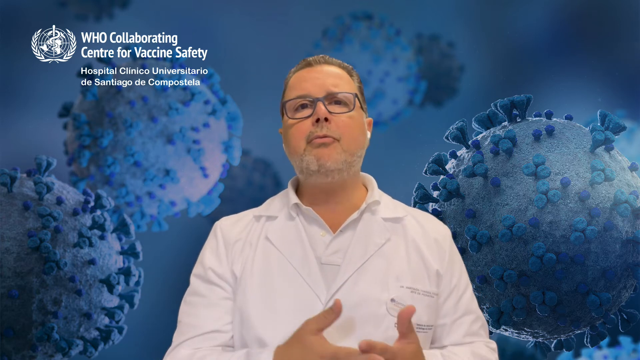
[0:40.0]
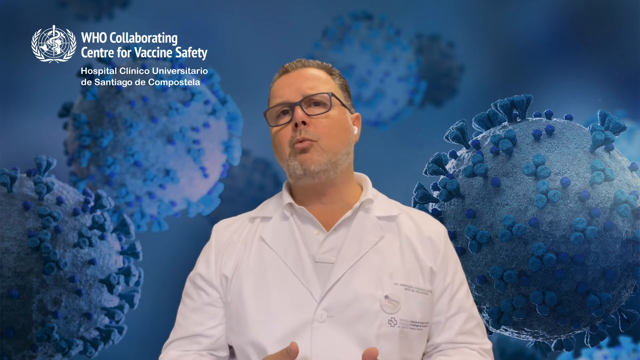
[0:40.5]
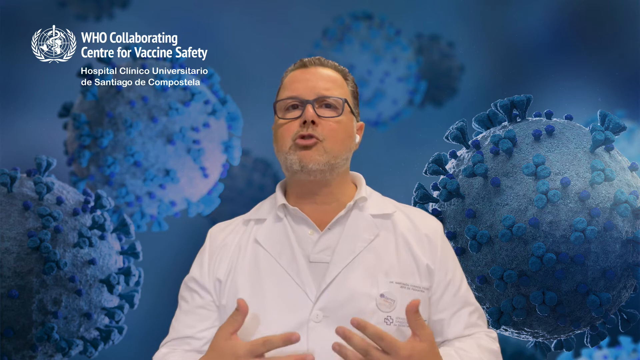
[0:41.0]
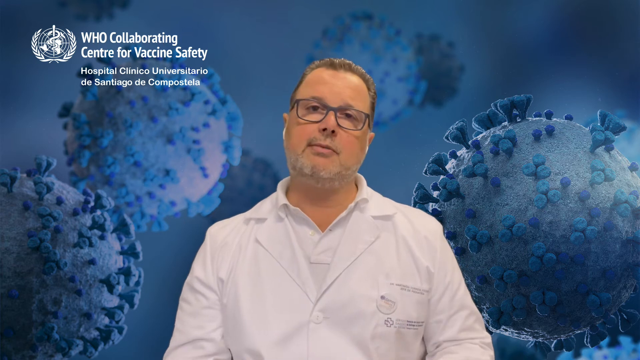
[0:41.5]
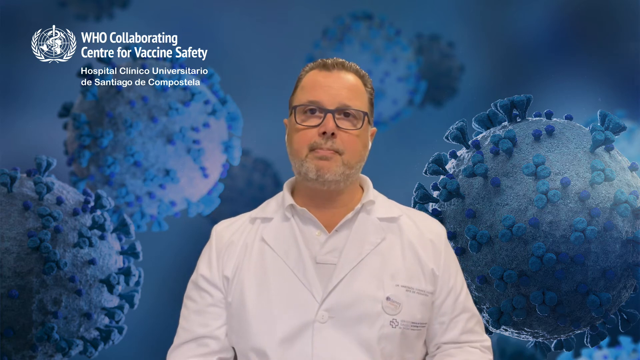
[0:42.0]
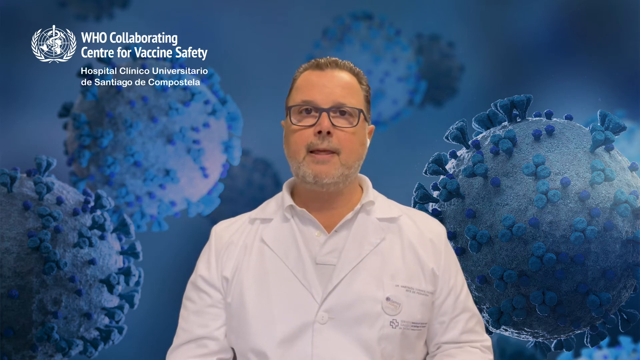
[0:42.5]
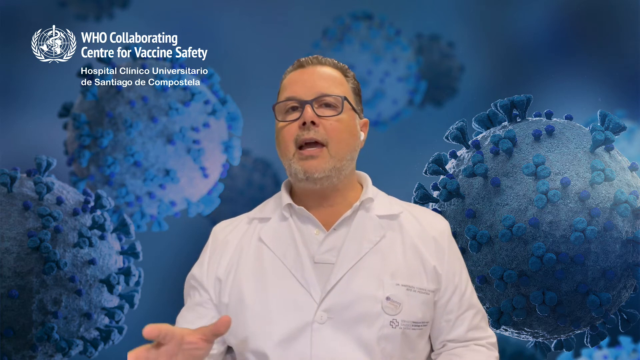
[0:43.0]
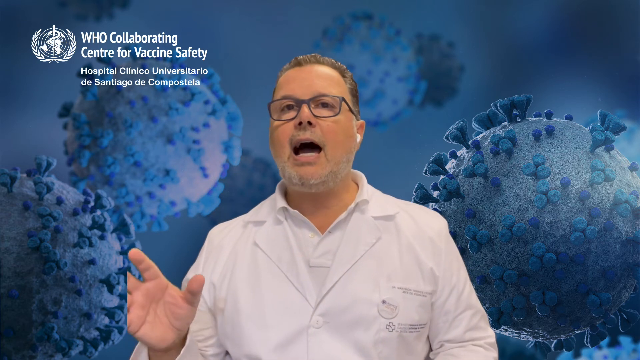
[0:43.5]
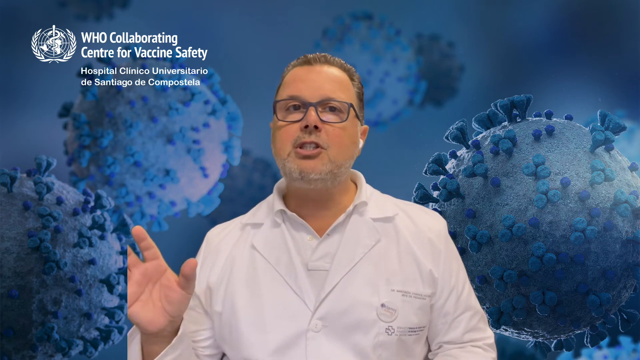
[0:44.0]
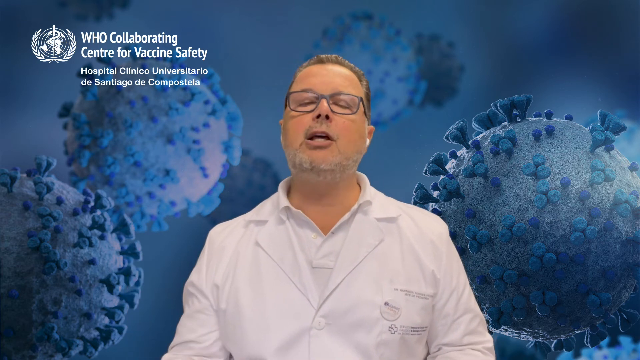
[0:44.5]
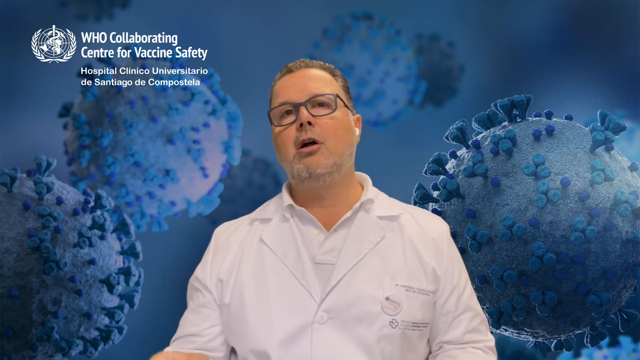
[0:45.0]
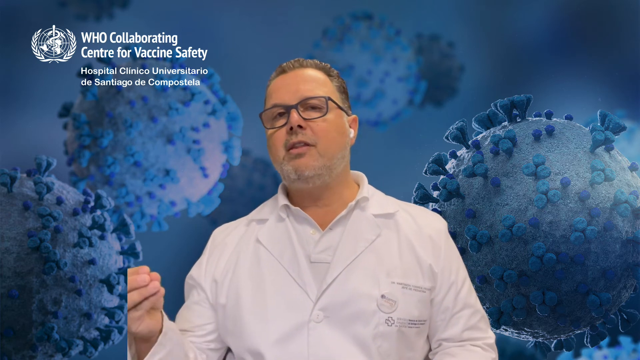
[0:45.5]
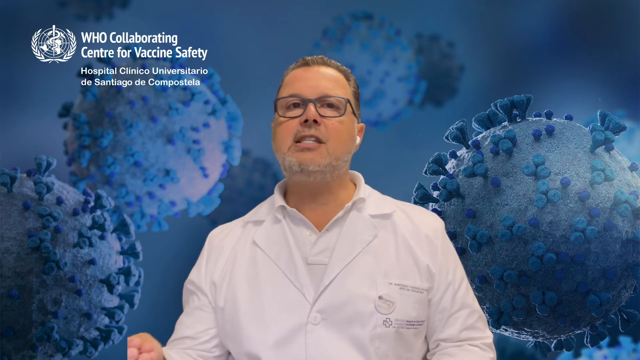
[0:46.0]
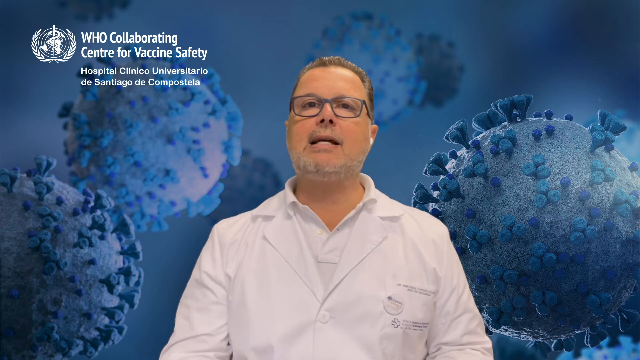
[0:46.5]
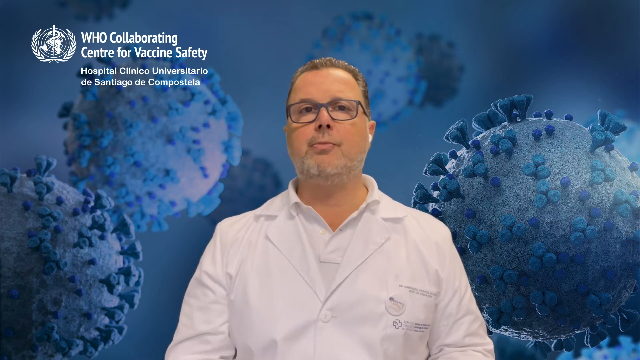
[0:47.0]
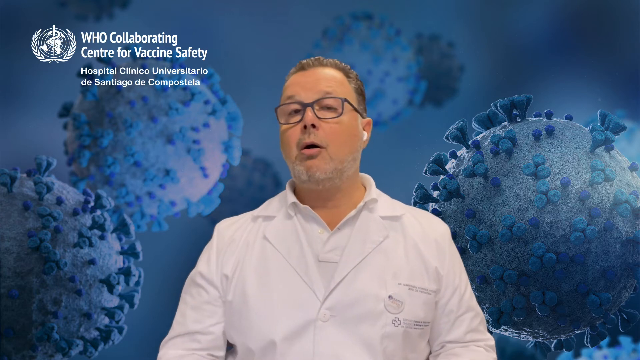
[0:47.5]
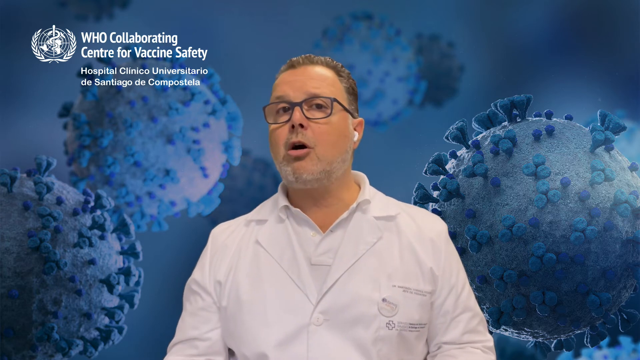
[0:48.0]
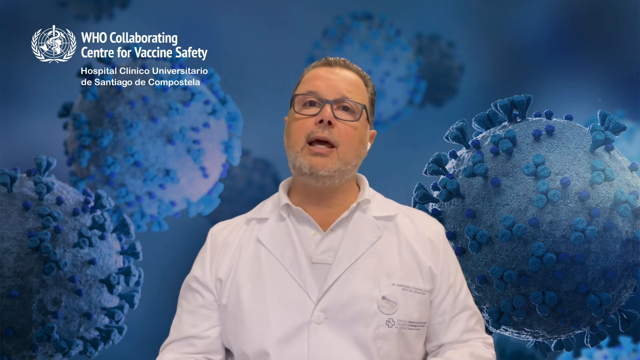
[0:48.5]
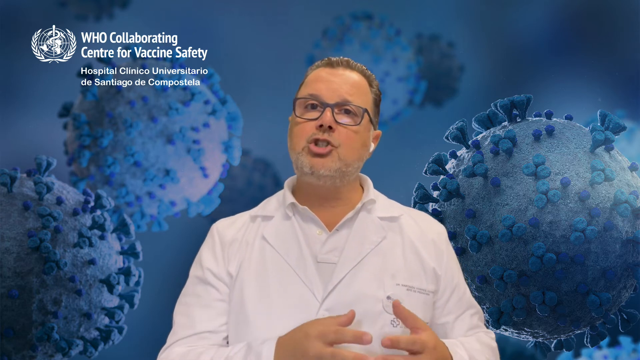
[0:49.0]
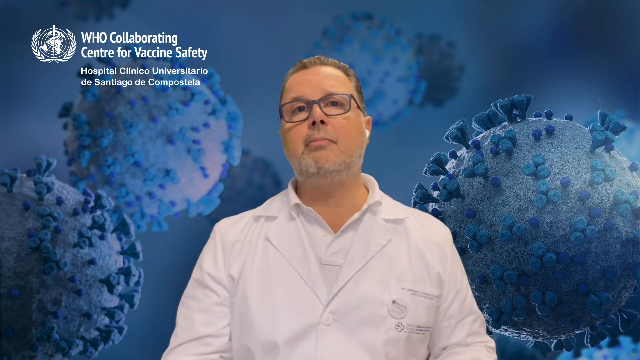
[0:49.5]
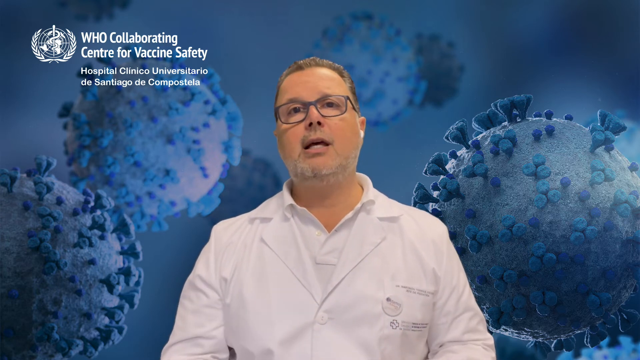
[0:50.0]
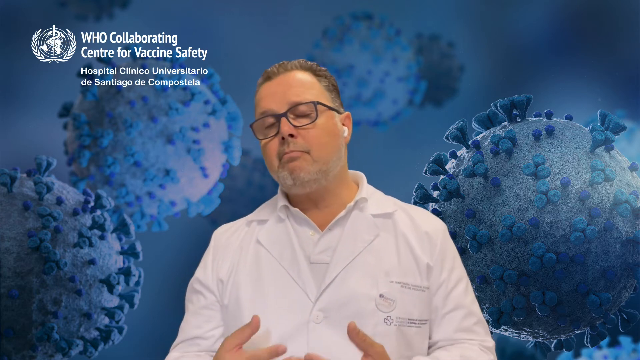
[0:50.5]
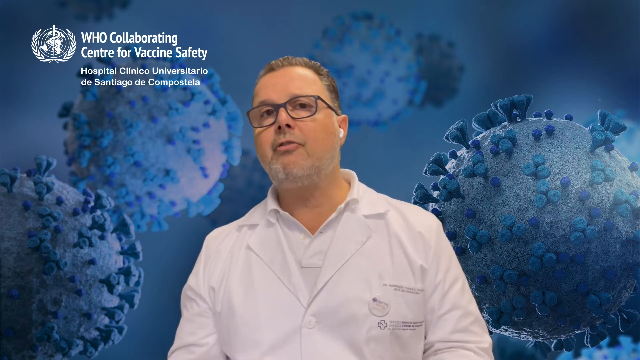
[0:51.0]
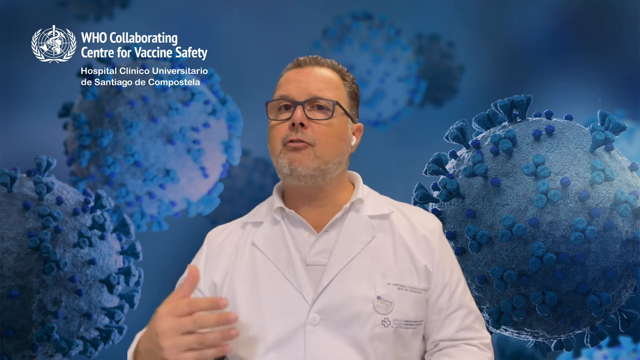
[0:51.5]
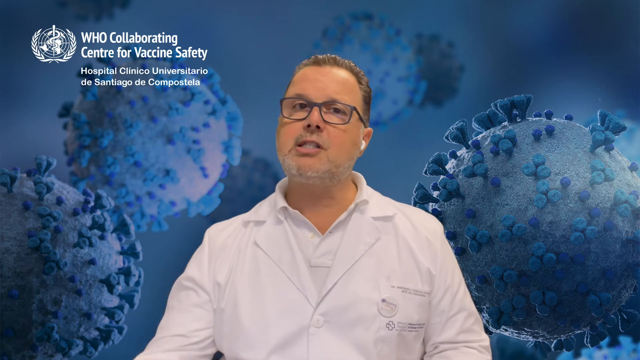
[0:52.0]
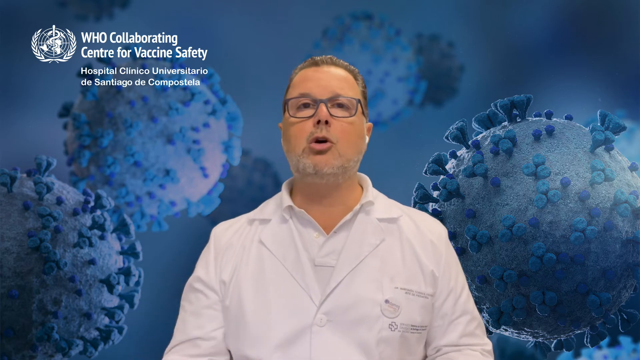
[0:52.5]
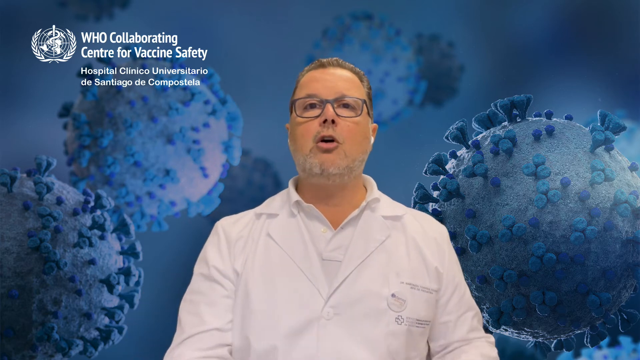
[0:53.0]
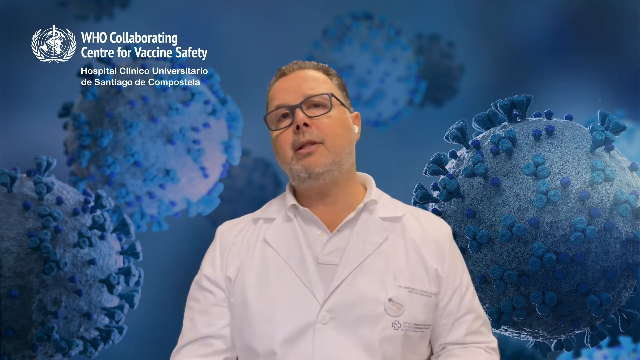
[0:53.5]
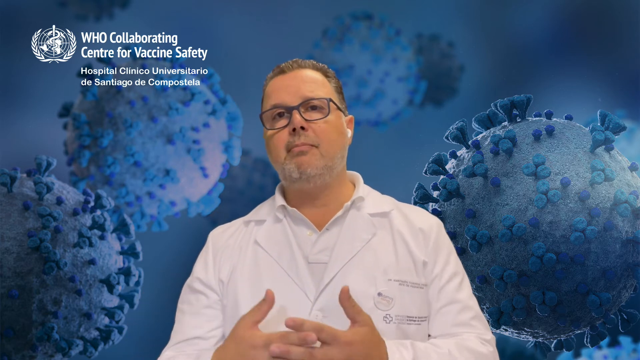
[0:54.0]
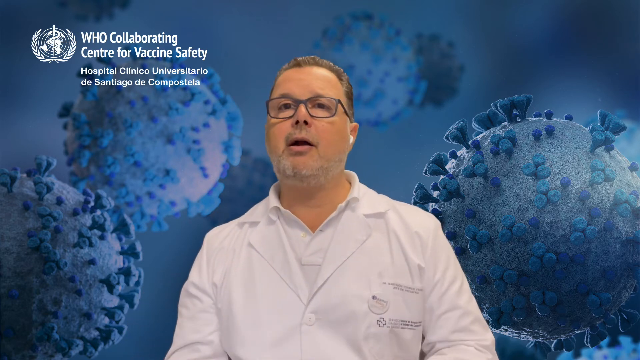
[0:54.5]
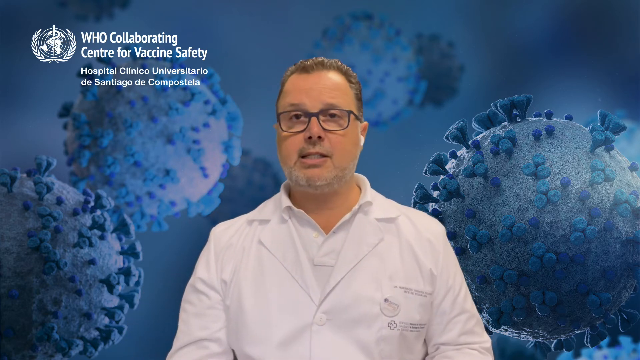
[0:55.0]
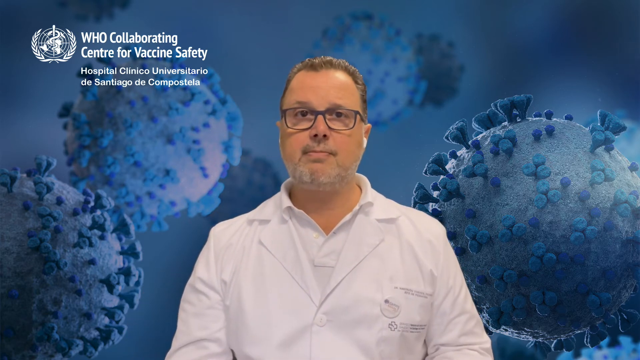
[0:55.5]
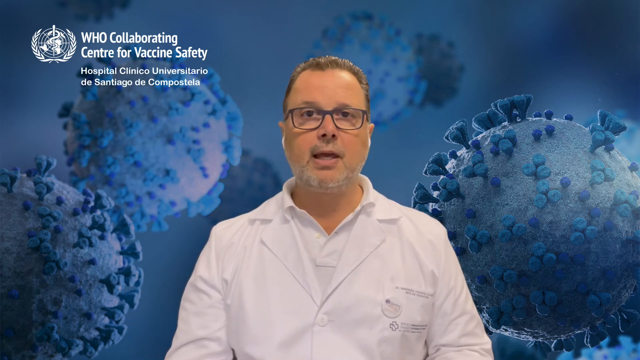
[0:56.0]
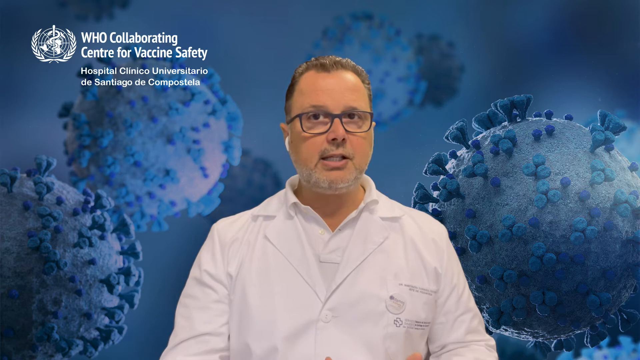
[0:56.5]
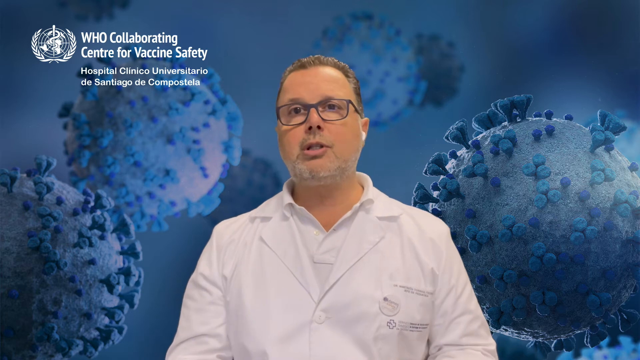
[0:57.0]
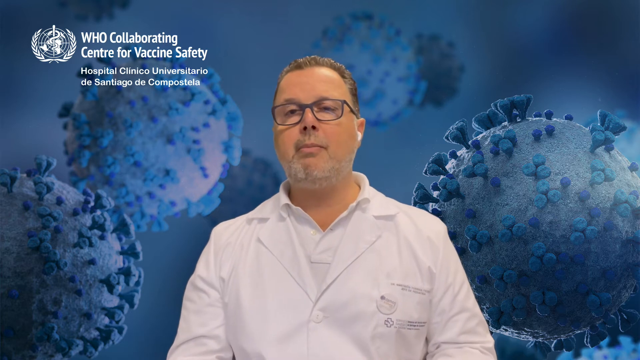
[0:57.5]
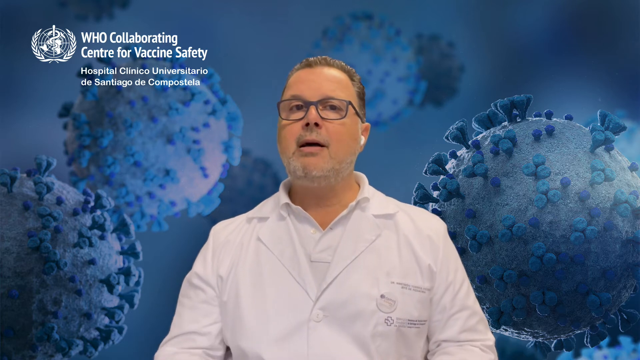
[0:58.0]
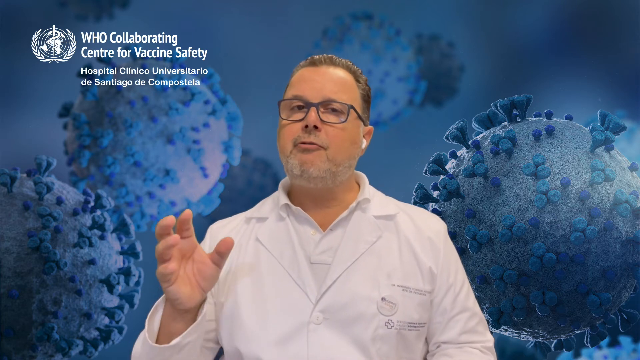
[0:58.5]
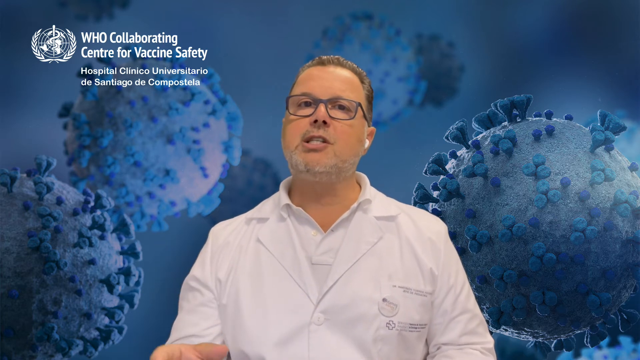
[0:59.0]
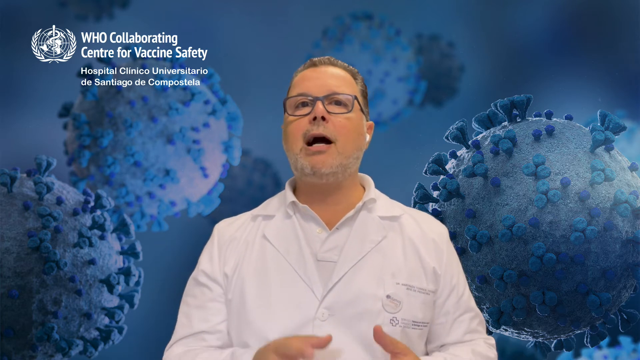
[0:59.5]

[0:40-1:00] The background is a blurry blue, with eight spherical objects that are supposed to be viruses visible in it. In the center is a man wearing a white lab coat or doctor's coat over a white shirt, a white plastic piece in both ears, and black glasses. In the upper left corner is a symbol, with the white text "WHO Collaborating Center for Vaccine Safety" to its right and, beneath that in smaller white text, "Hospital Clinico Universitario de Santiago de Compostela". The man faces the viewer, his mouth moving as he speaks. He brings his hands down, then mainly moves his right hand back and forth while moving his neck back and forth as well. He moves his hands together again, then his right hand alone, and finally brings both hands together again, moving them to emphasize his speech.